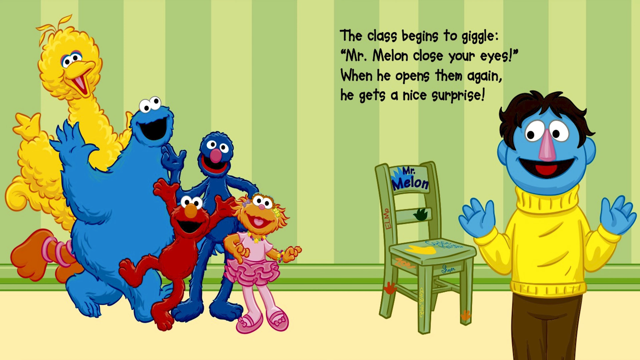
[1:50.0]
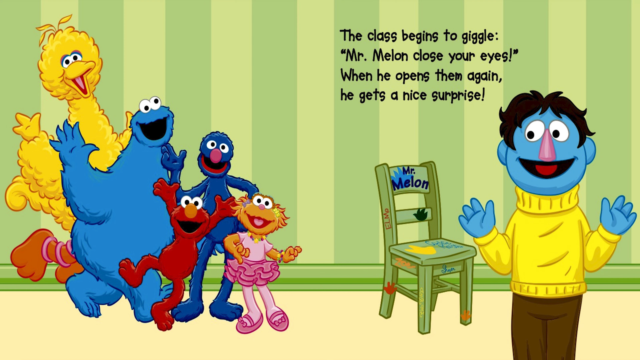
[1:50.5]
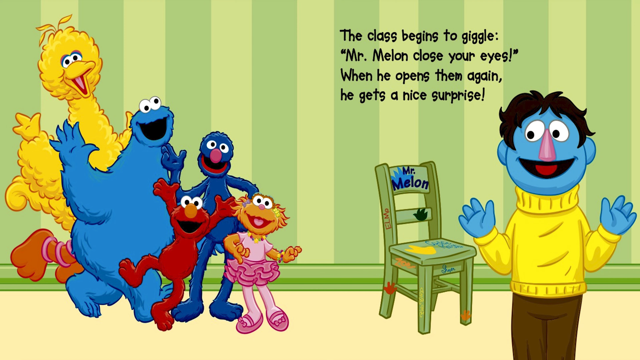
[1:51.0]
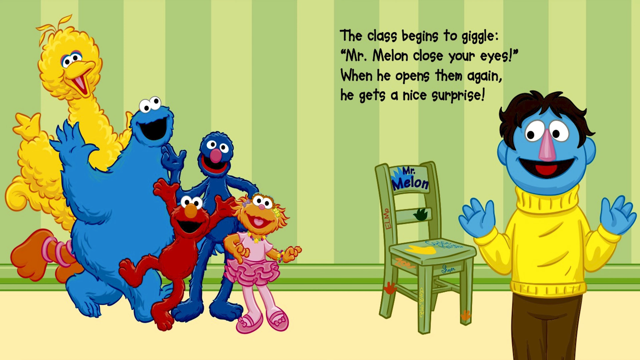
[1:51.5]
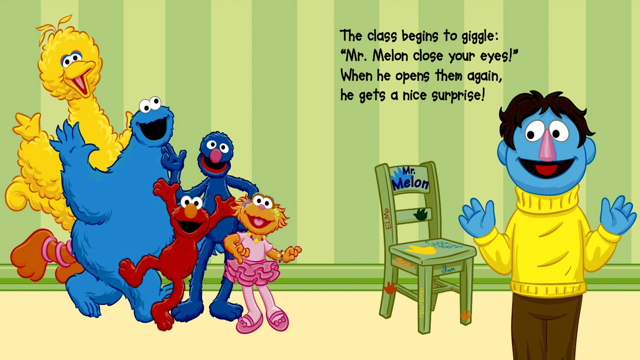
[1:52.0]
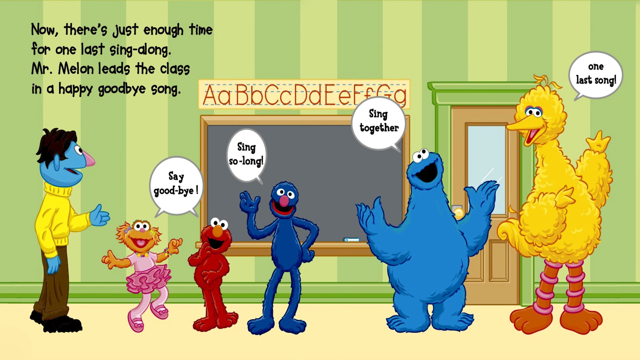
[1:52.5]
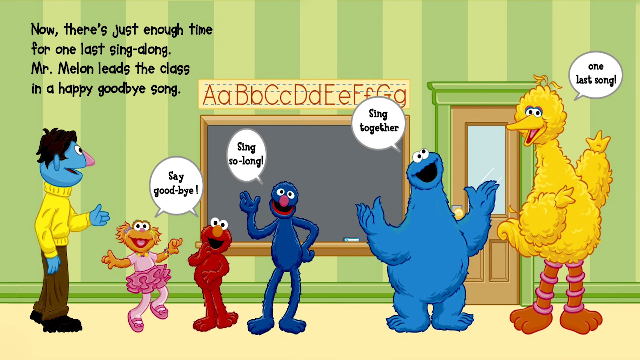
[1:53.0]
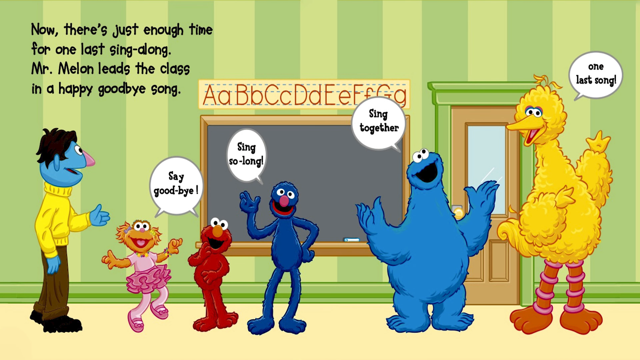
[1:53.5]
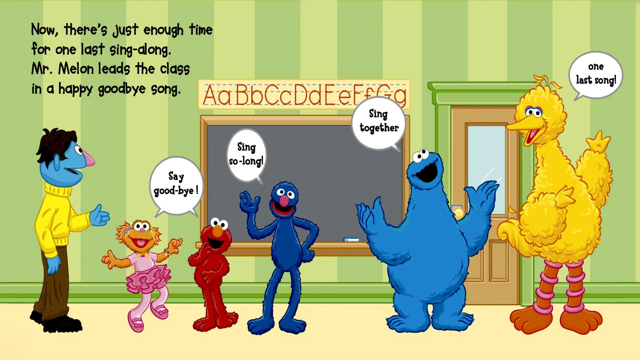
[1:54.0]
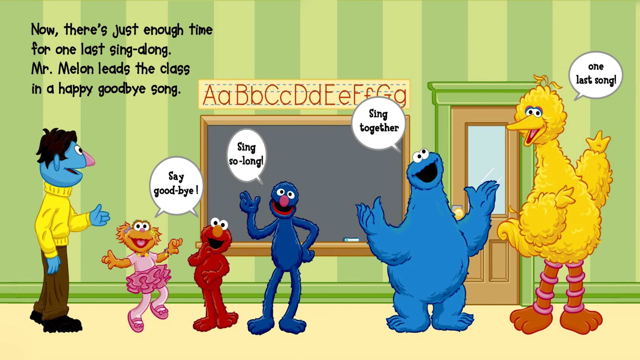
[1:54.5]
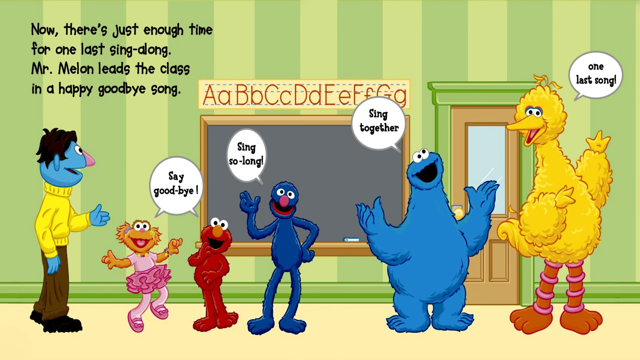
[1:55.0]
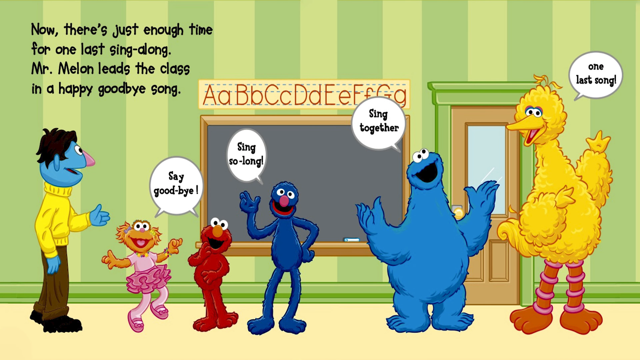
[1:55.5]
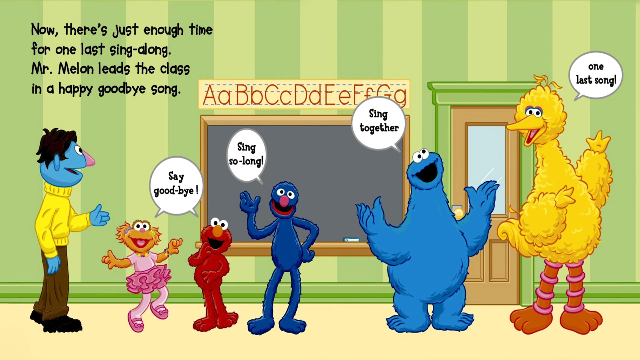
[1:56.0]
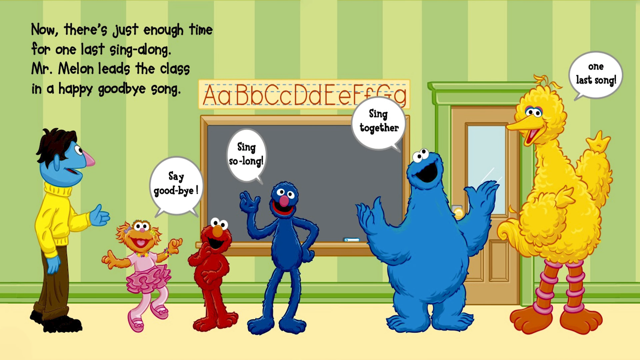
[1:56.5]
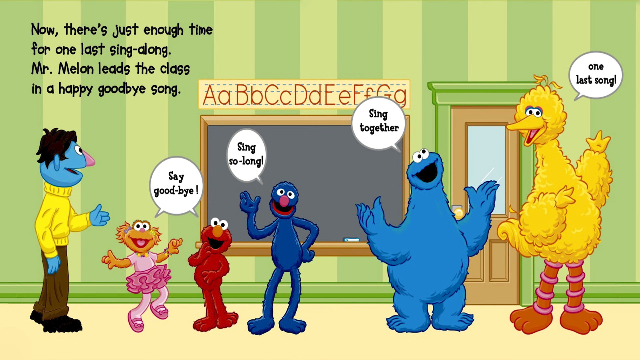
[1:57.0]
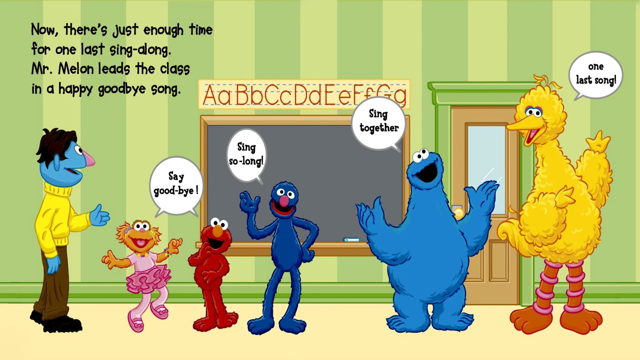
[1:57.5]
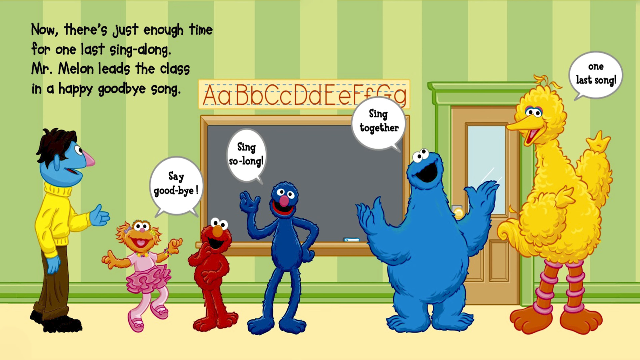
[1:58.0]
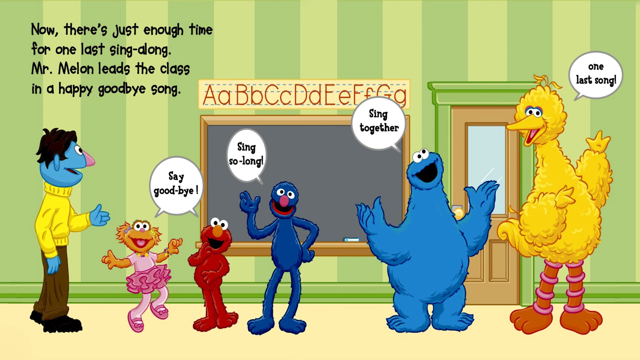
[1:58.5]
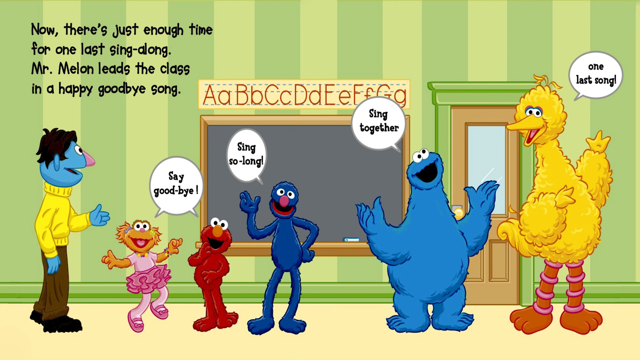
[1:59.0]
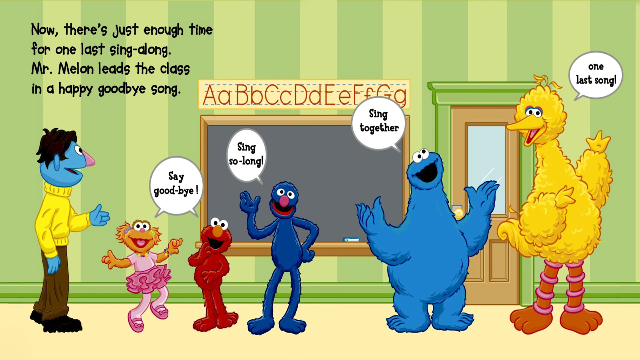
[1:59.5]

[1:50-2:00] Several Sesame Street characters appear, including Cookie Monster, who looks bigger than he normally does. There is a chair that says "Mr. Melon," apparently decorated for him by the students, with the handprints of Elmo, Big Bird, Cookie Monster, Grover, and the little orange character in the pink tutu. Mr. Melon looks pleasantly surprised and grateful, and his students look very proud of themselves. Text says "The class begins to giggle, and they say, Mr. Melon, close your eyes. When he opens them again, he gets a nice surprise." The chair's base color is green, but it is colorful from the handprints, and there seem to be some signatures as well, possibly the name Elmo written up the side. The wall is two different shades of green.